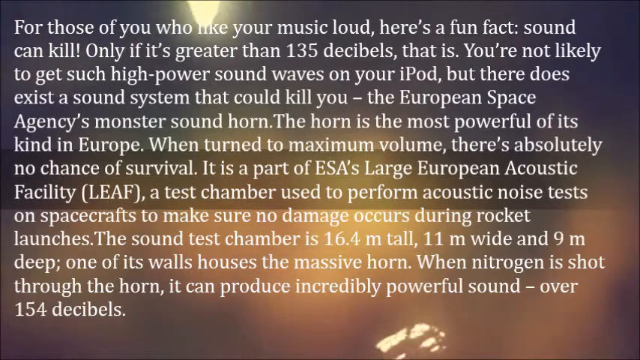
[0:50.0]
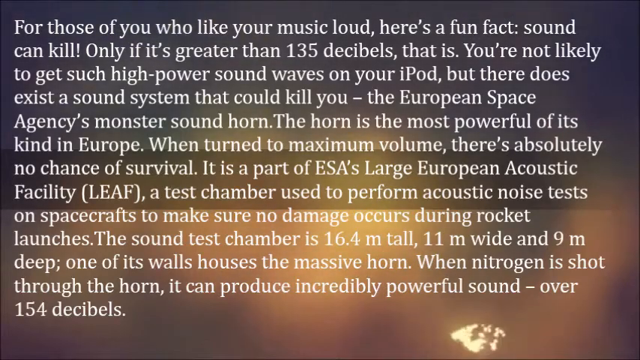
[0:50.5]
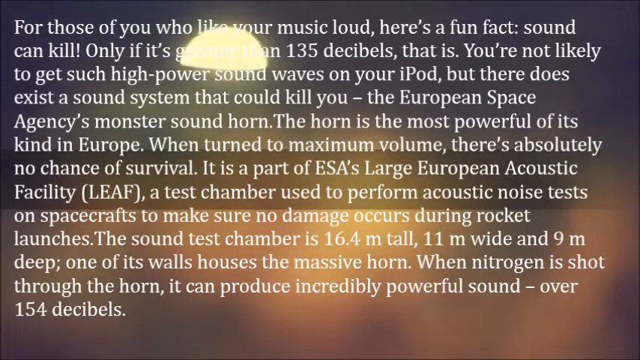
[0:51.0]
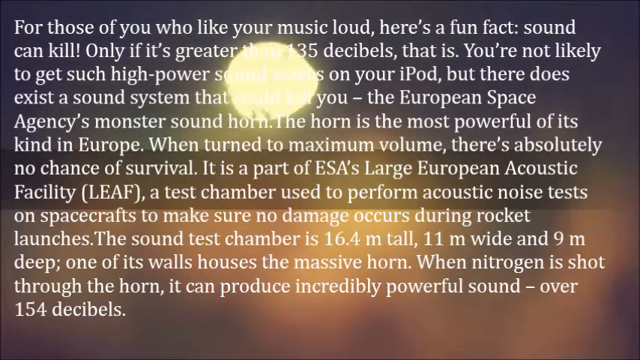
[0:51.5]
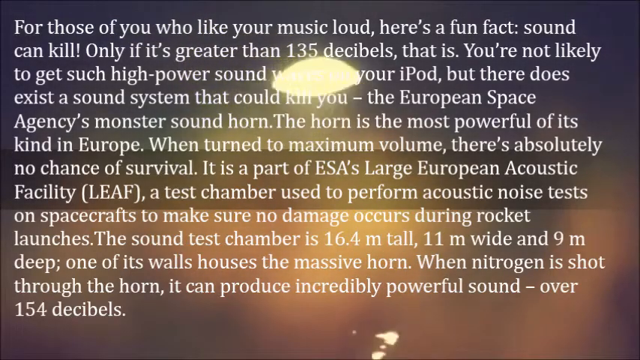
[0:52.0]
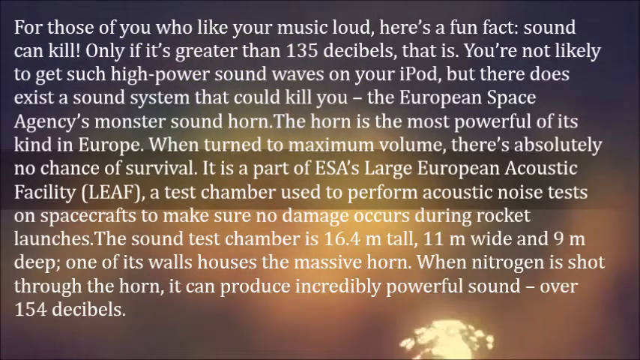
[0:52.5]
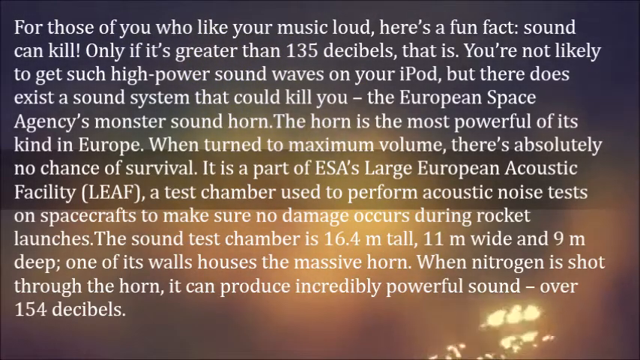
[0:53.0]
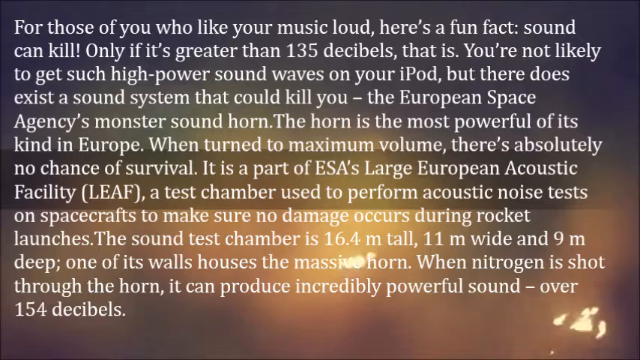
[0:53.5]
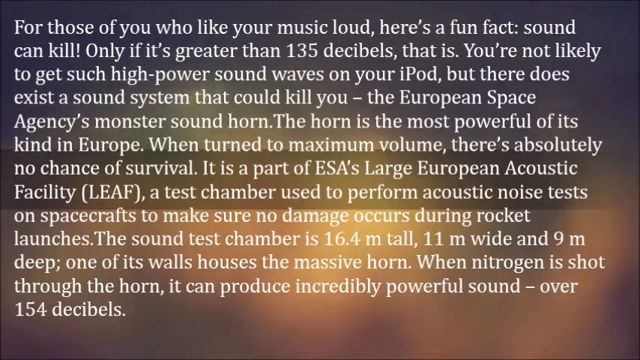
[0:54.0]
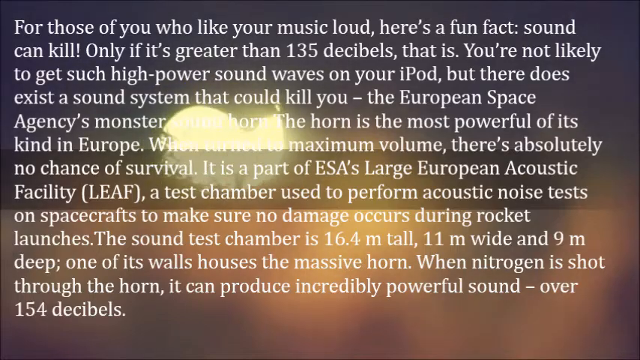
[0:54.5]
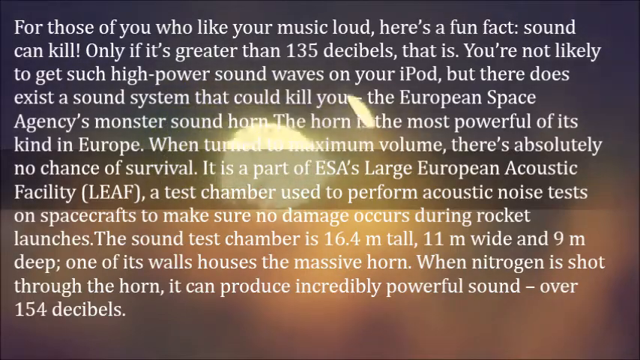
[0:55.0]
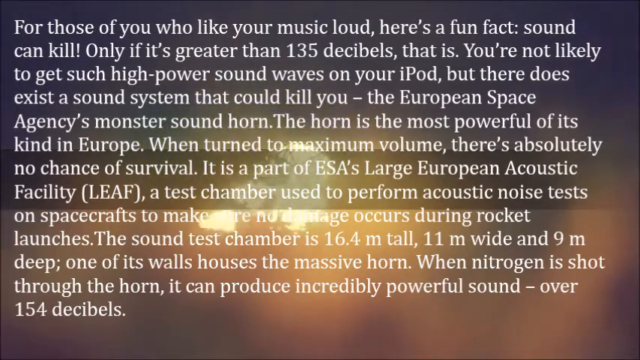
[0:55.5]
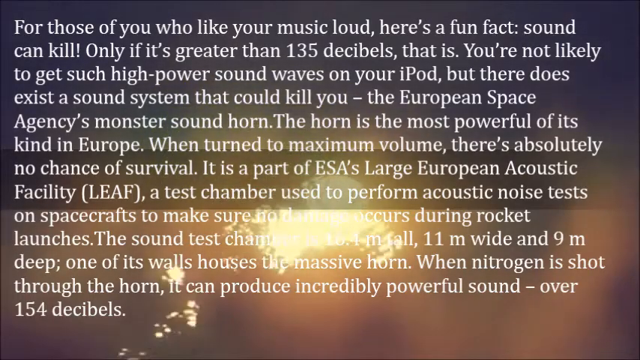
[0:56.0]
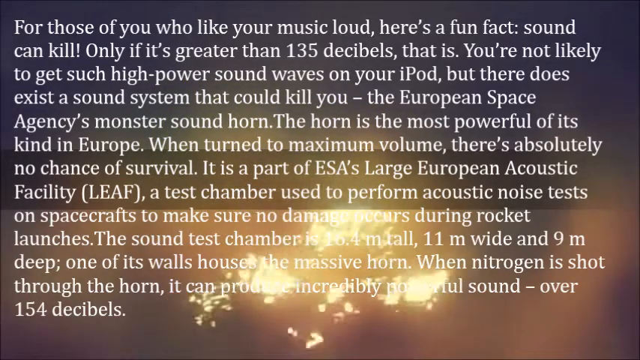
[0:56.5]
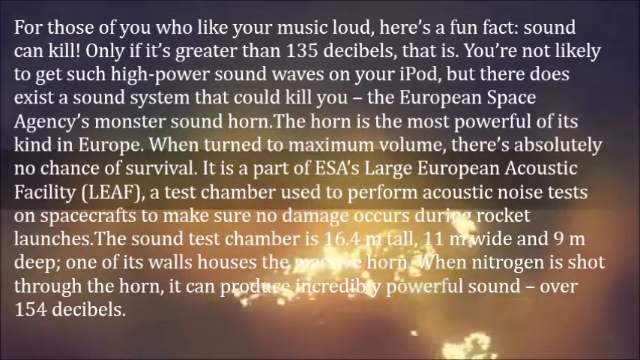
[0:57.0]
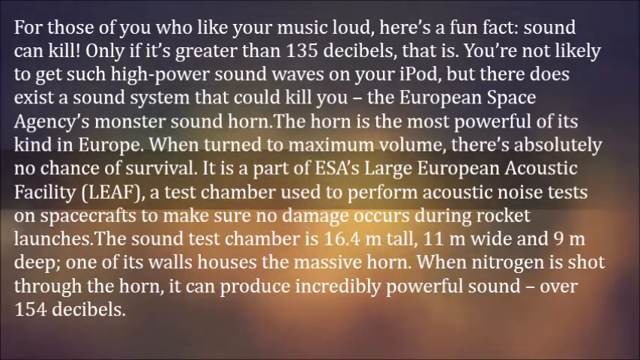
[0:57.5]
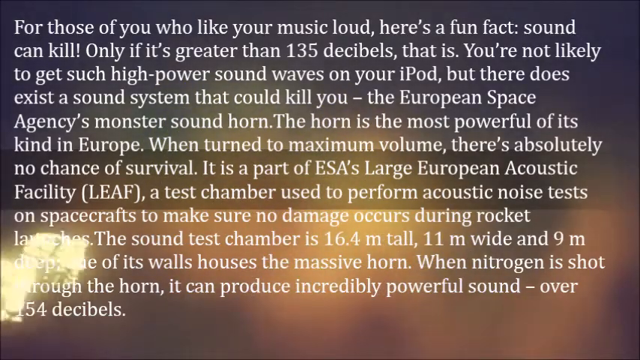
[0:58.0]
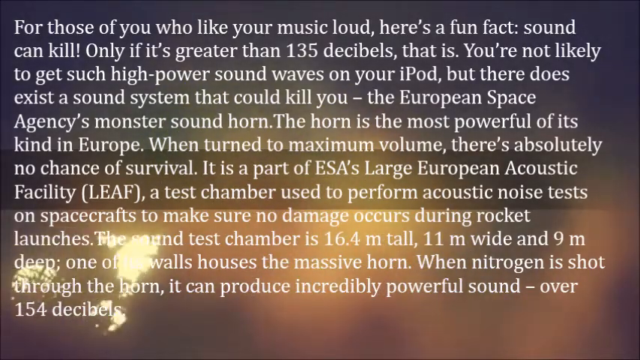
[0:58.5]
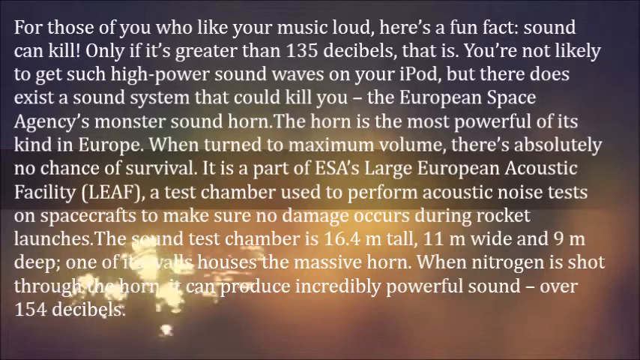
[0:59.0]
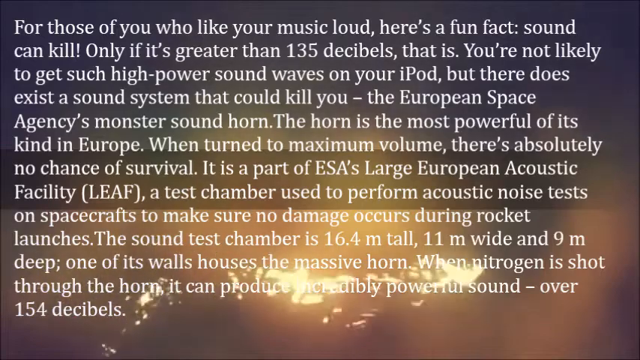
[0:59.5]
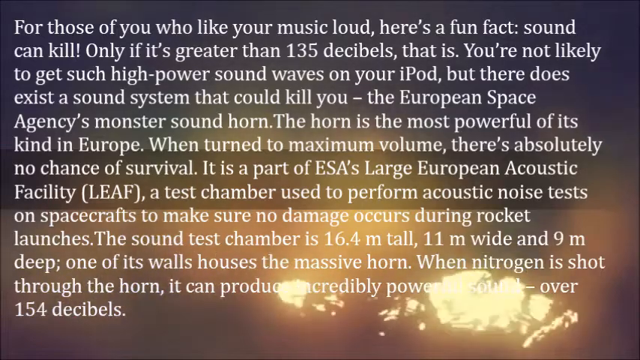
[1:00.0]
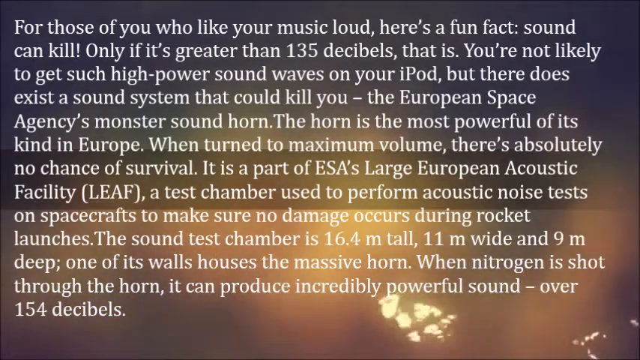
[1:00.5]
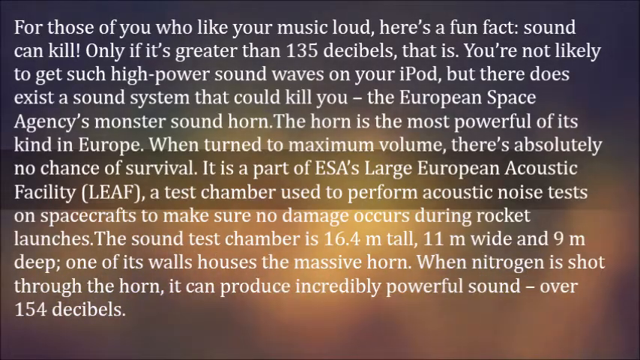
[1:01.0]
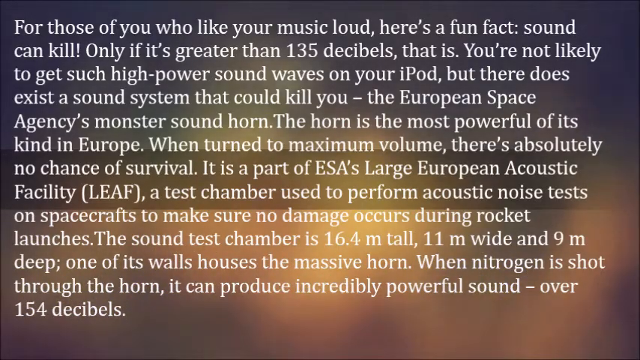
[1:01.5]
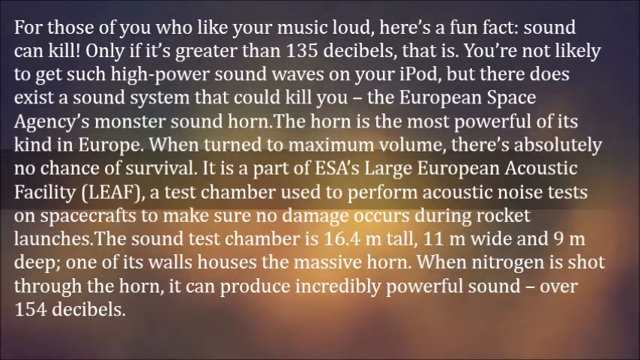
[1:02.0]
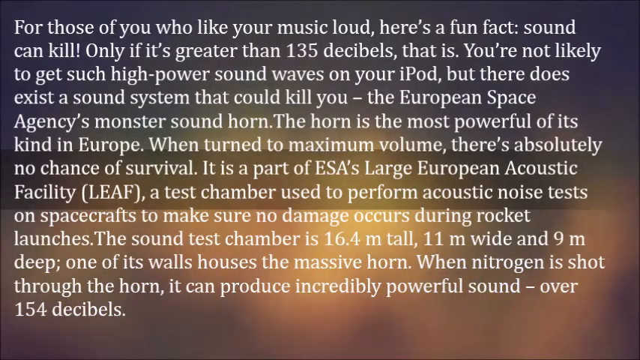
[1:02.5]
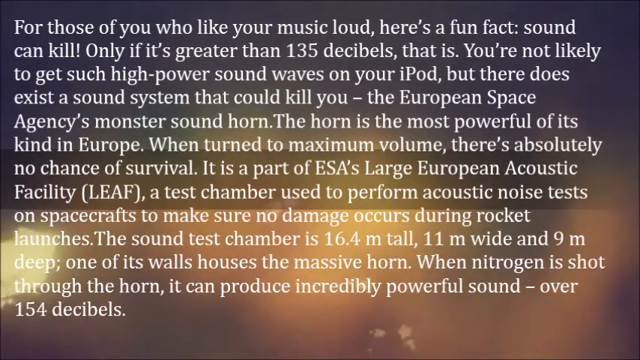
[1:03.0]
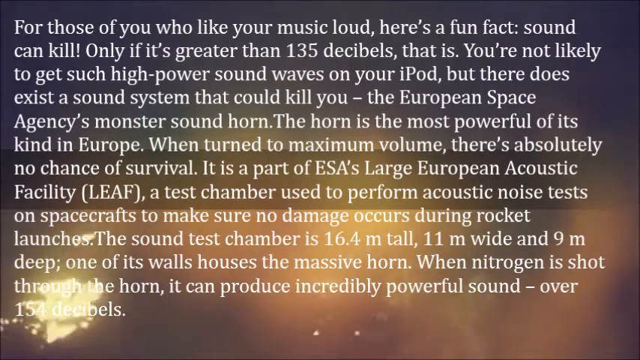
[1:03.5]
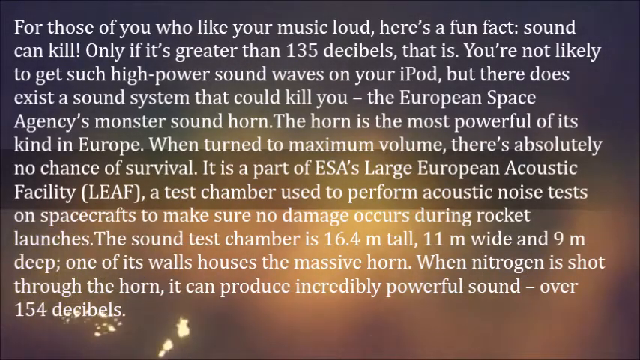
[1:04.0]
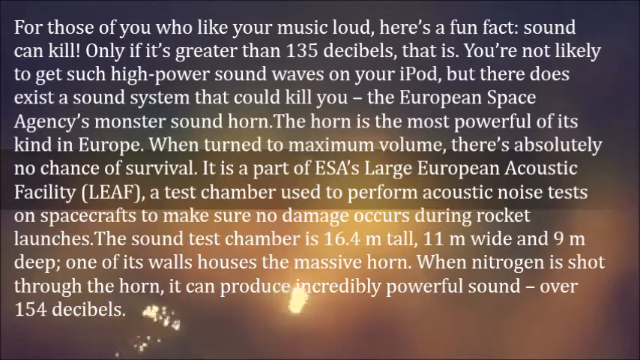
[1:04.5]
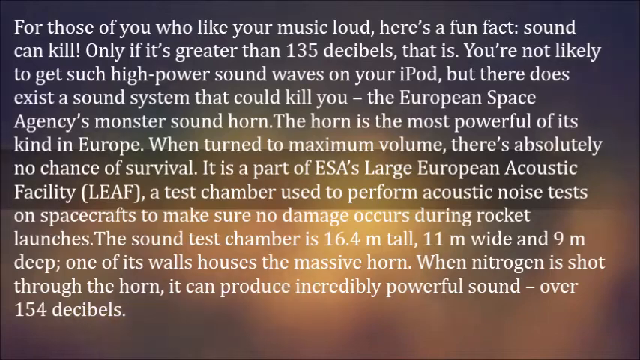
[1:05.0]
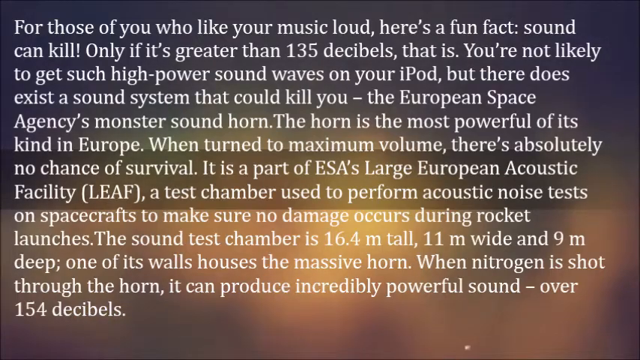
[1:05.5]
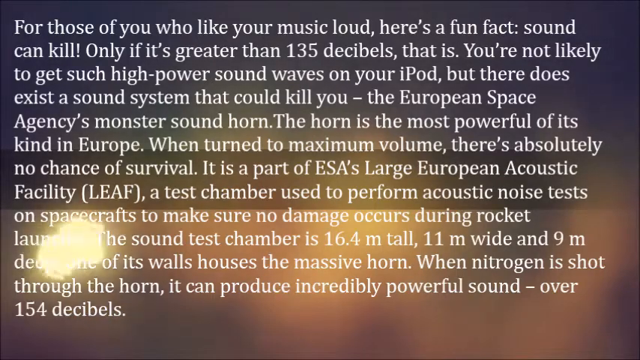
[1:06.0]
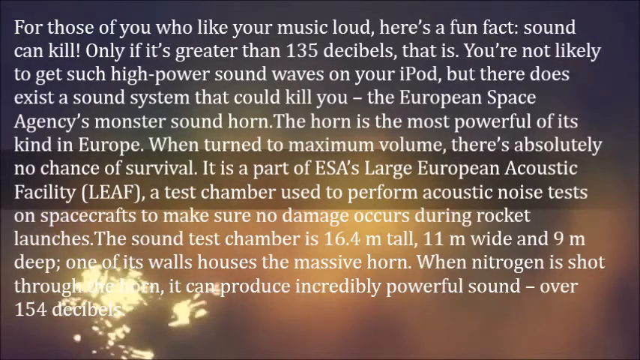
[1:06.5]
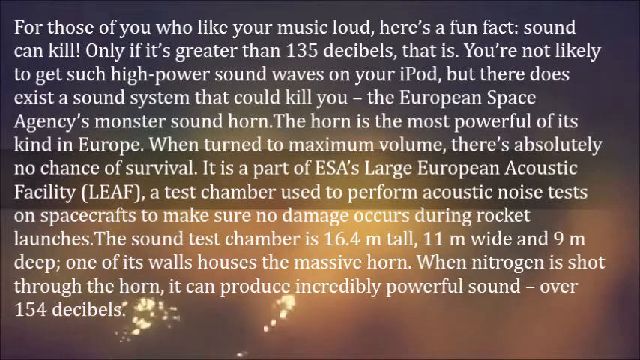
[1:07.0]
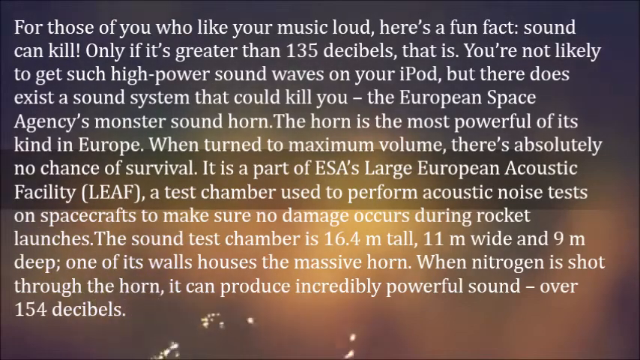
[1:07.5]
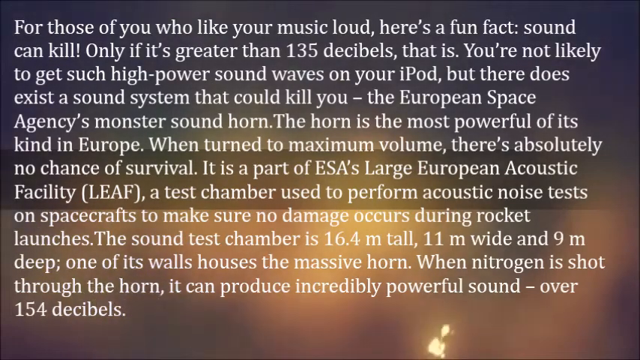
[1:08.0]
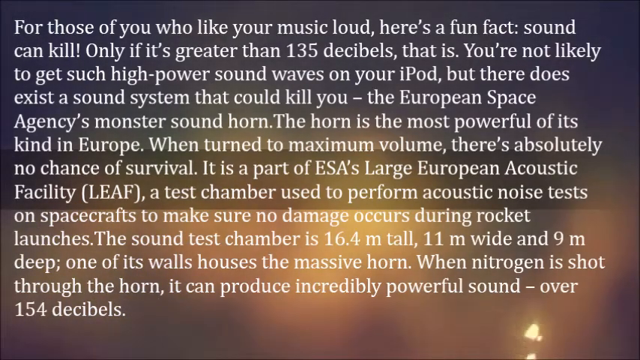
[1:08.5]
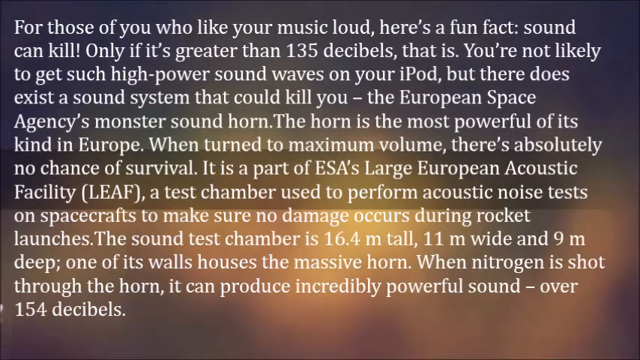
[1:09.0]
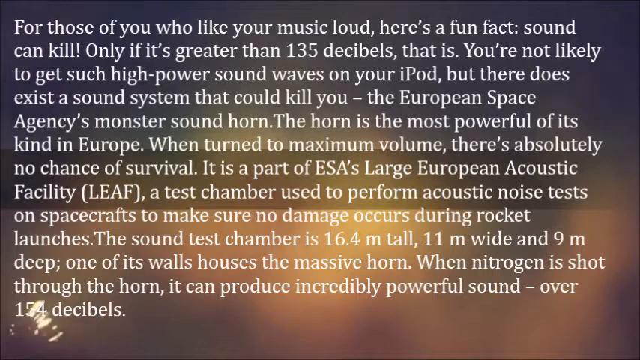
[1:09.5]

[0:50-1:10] The same paragraph remains on screen, about how sound can kill if it is greater than 135 decibels, how such sound is not likely to come from a regular iPod, and how the European Space Agency's monster sound horn produces 154 decibels. The chamber's dimensions of 16.4 meters tall, 11 meters wide and 9 meters deep are shown.